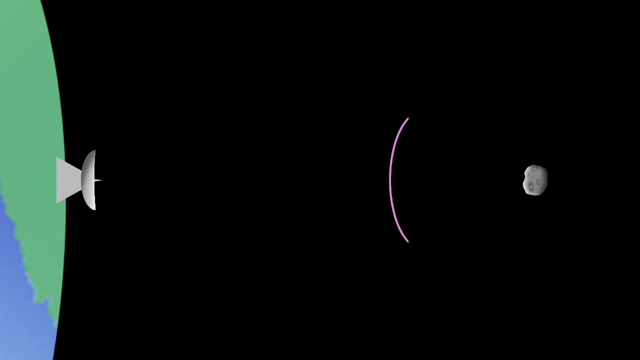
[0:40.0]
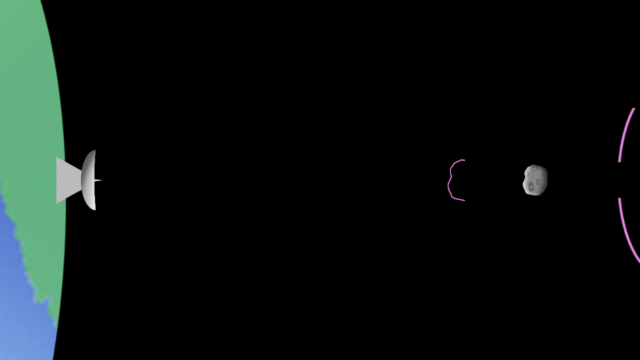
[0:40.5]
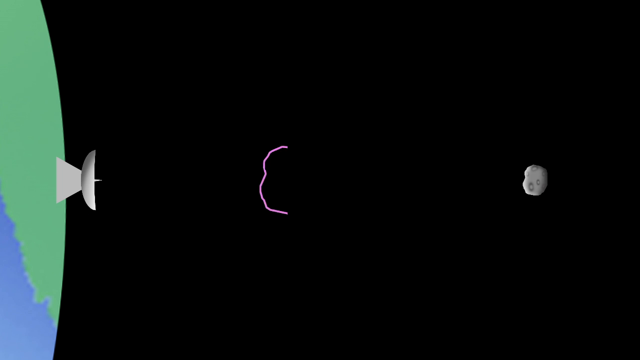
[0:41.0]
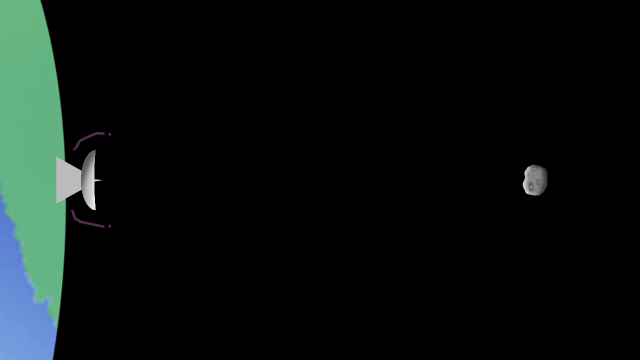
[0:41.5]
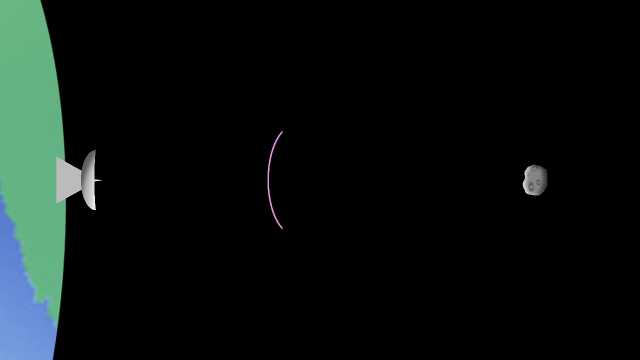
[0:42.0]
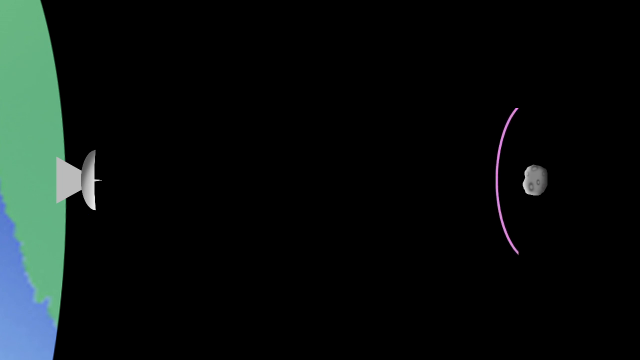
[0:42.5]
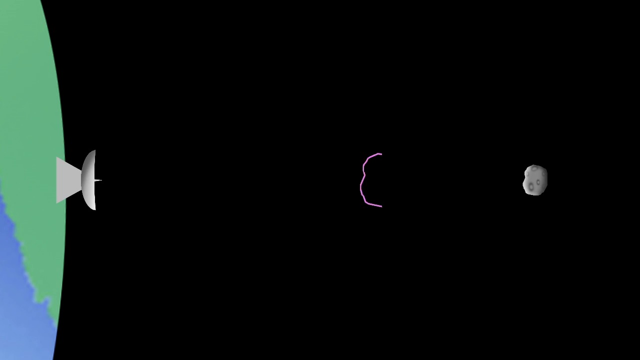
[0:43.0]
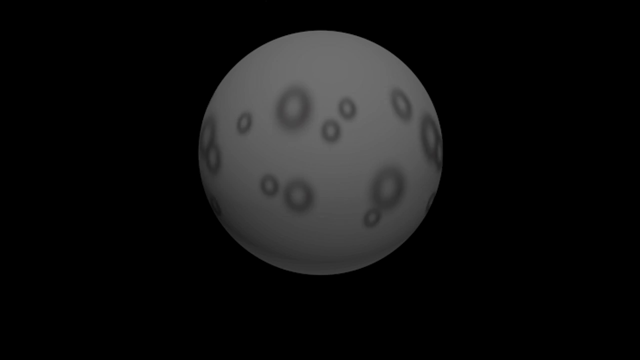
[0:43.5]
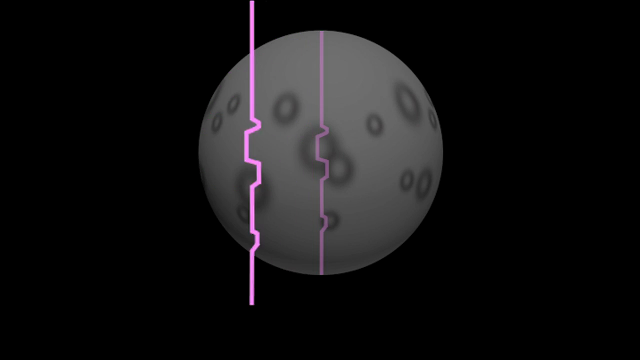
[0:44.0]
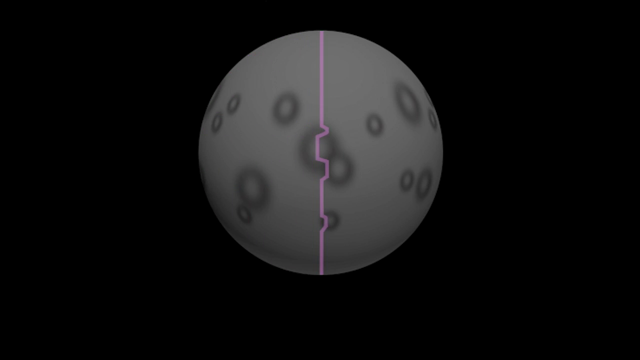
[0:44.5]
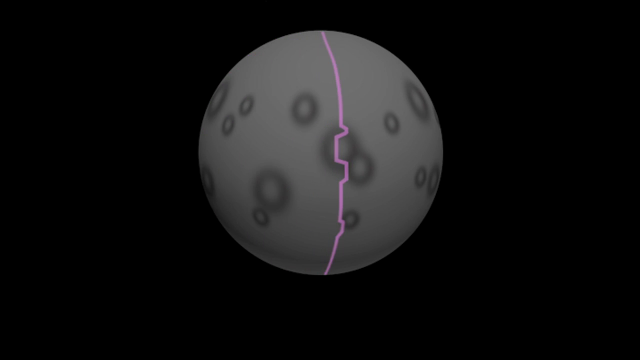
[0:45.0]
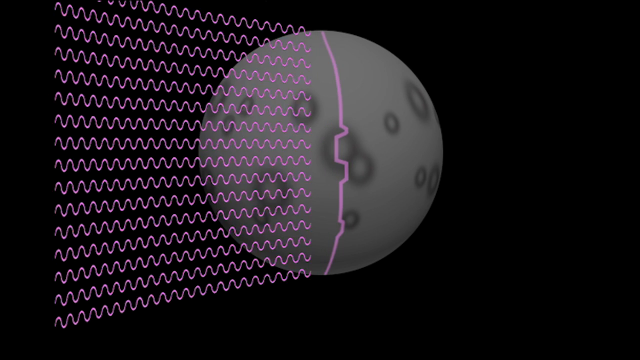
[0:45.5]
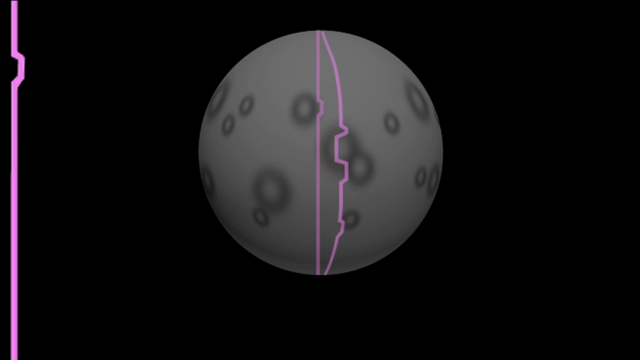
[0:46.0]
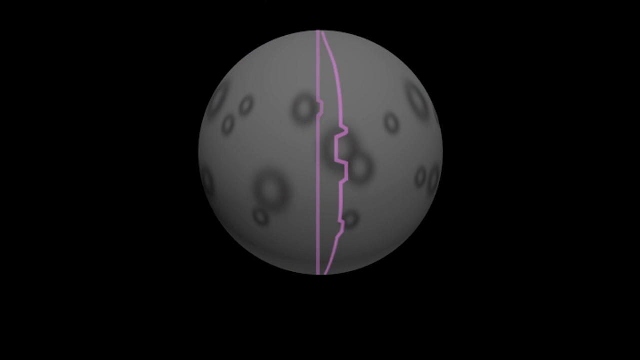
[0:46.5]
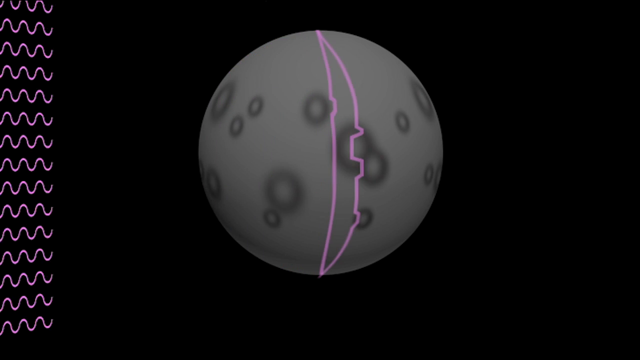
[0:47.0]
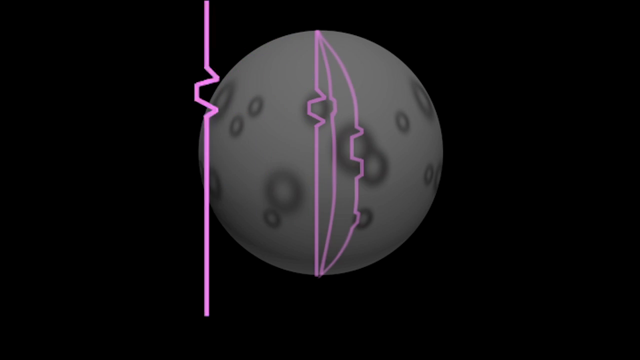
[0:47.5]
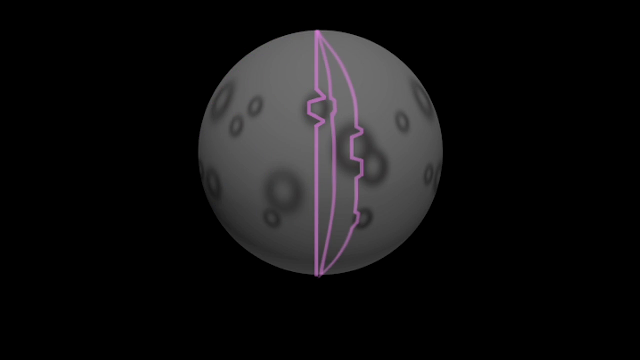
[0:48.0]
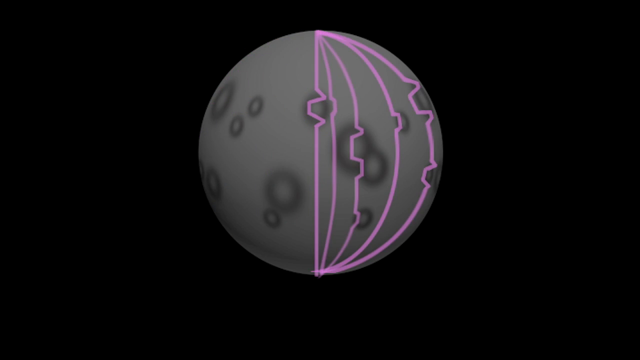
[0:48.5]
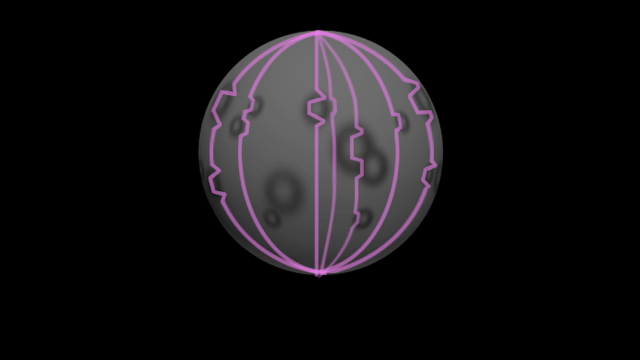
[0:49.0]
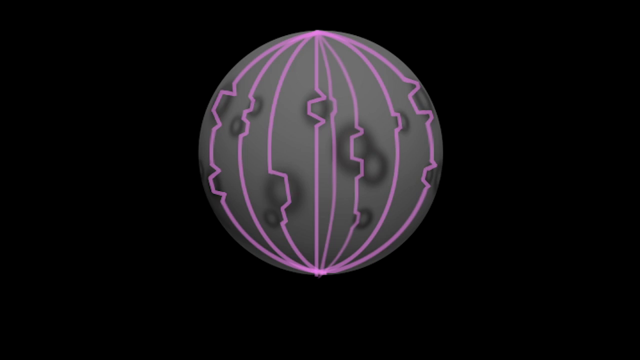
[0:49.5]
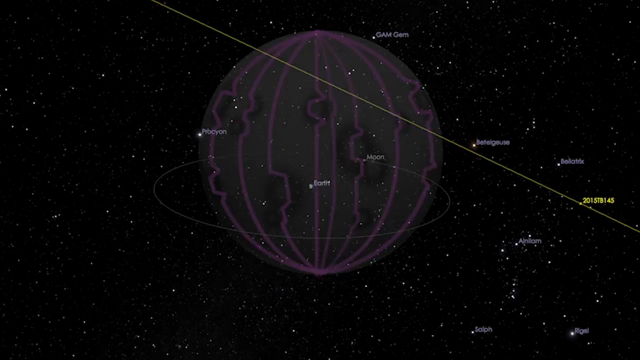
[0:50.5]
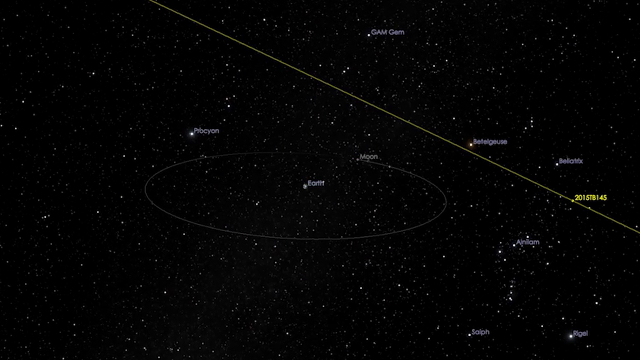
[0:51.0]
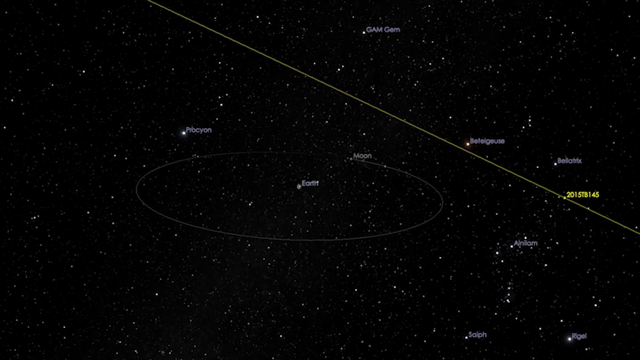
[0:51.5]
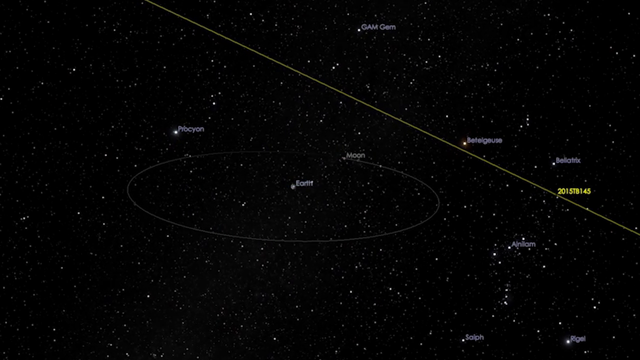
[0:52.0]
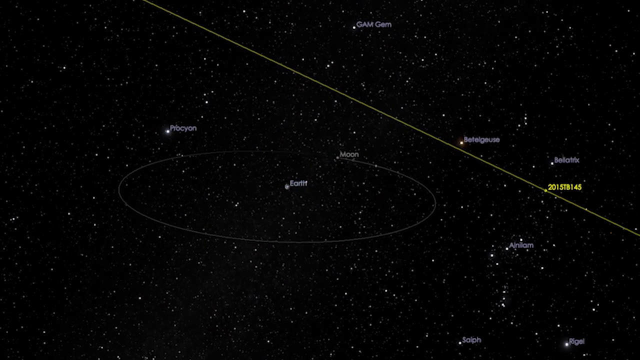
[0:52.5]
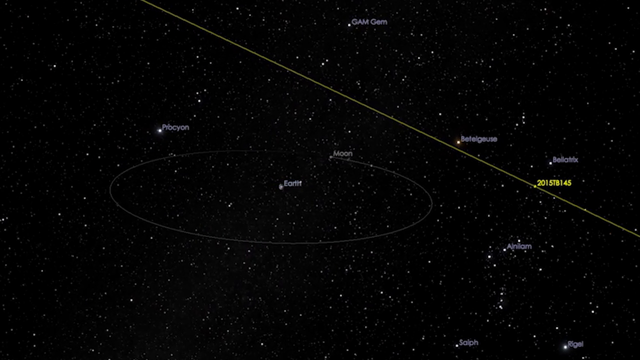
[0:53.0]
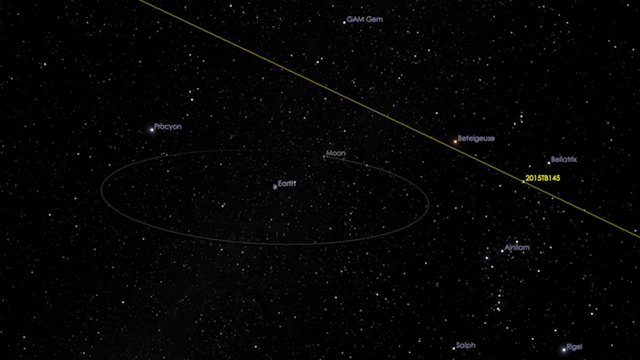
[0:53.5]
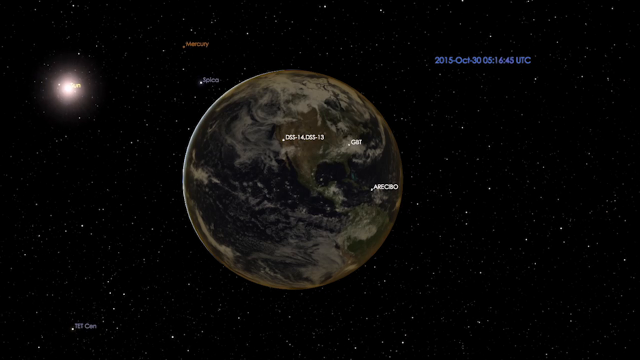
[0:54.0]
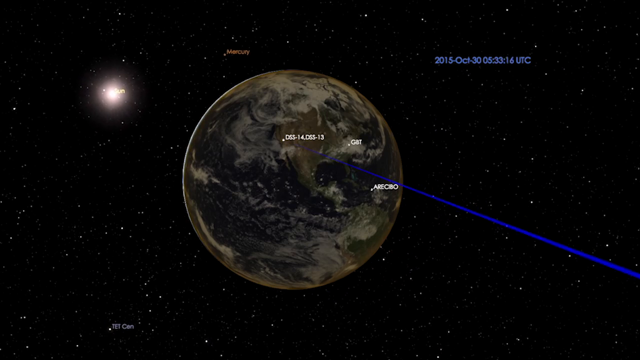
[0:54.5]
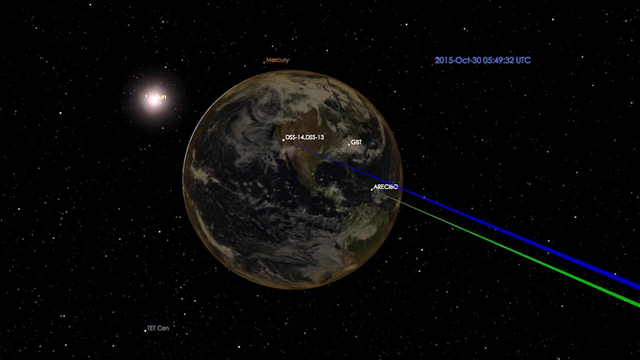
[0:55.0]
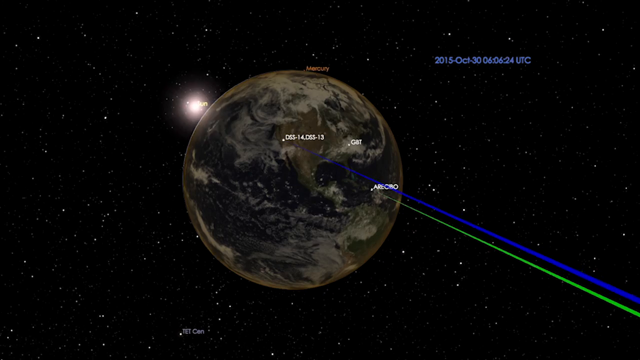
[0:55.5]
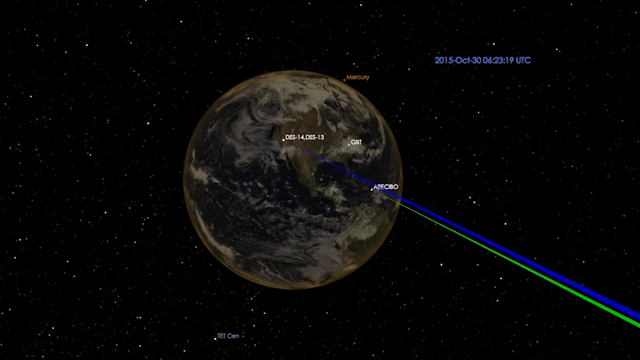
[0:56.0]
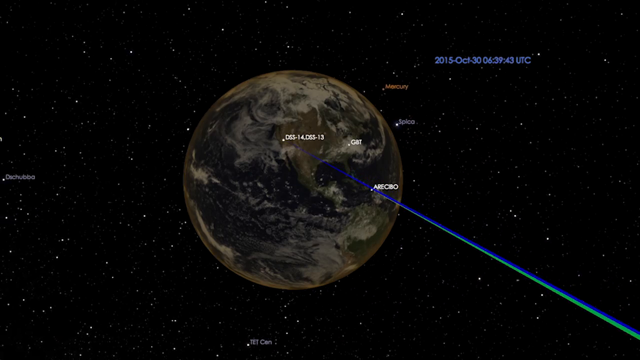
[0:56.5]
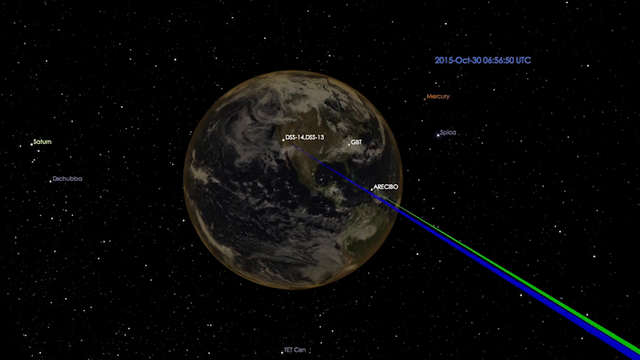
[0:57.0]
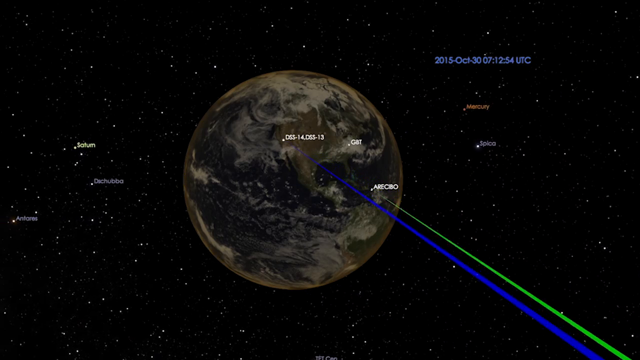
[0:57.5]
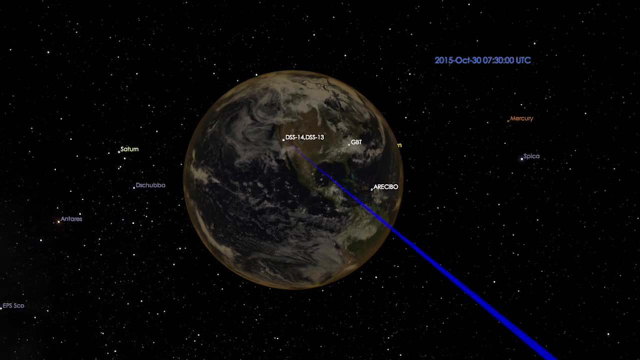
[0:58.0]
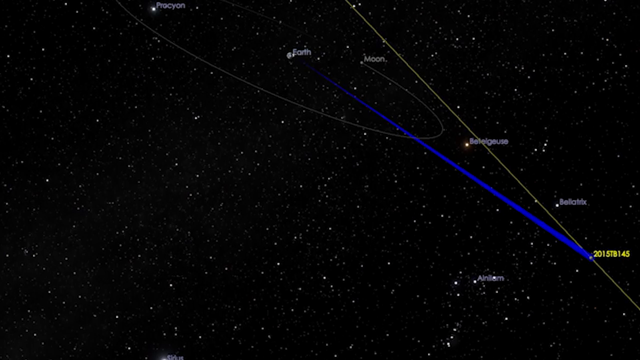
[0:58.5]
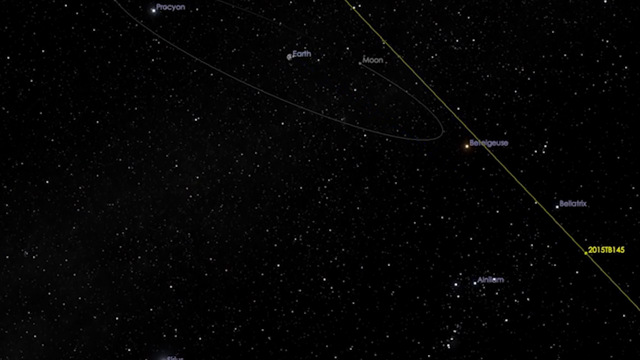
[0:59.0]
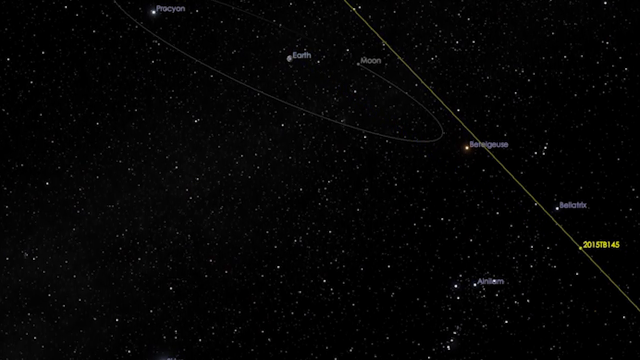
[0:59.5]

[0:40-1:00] The graphic of the radar sending signals back and forth to the asteroid is shown, followed by what looks like a blow-up of the asteroid itself with some unreadable text on it. Visual mock-ups of waves, presumably radar waves and possibly microwaves, are shown hitting the asteroid and bouncing back off it, presumably toward Earth. Insets of paths carry text that cannot be read.